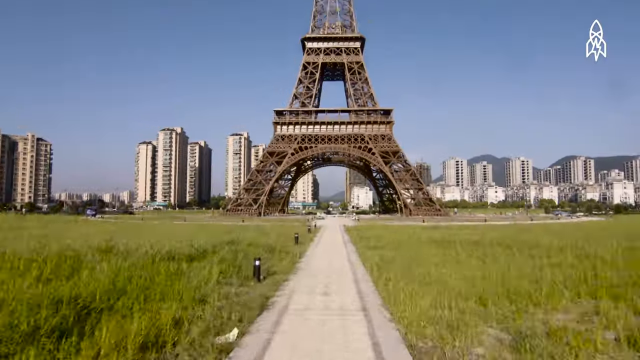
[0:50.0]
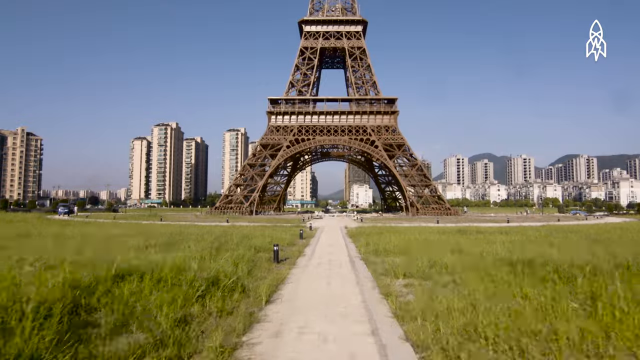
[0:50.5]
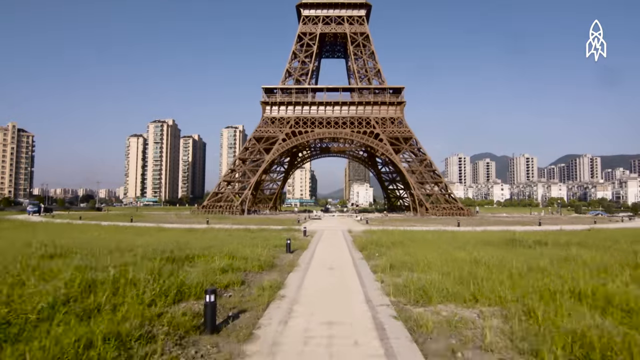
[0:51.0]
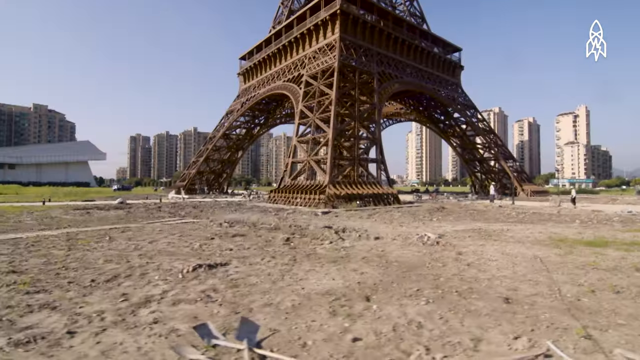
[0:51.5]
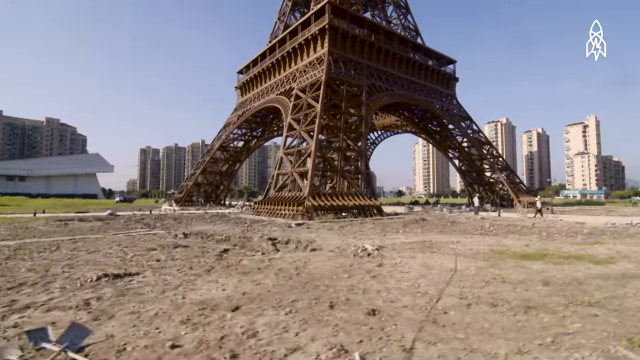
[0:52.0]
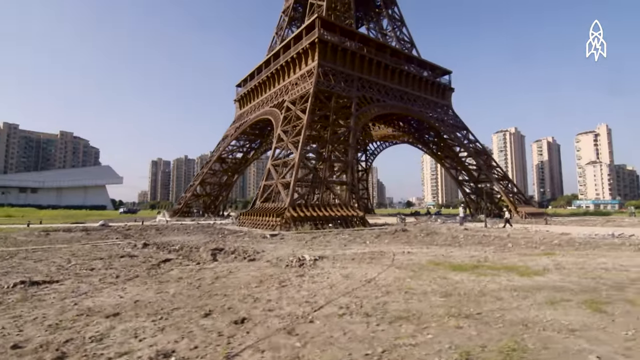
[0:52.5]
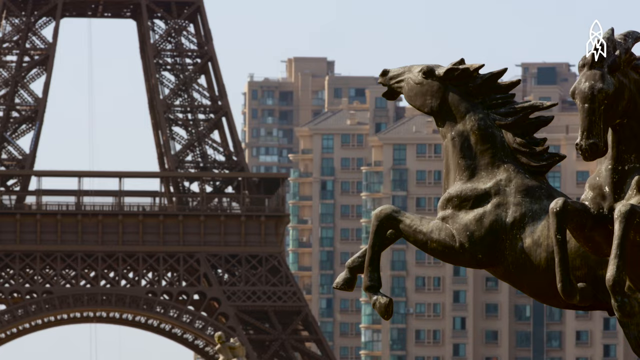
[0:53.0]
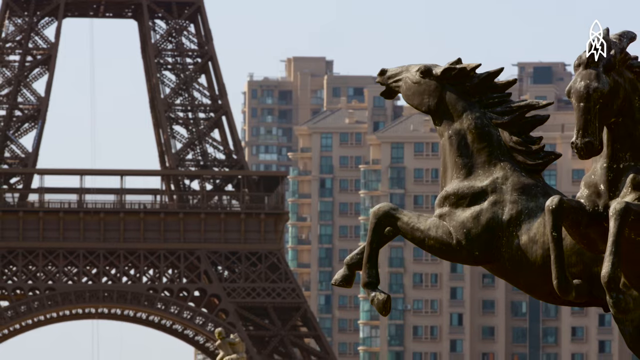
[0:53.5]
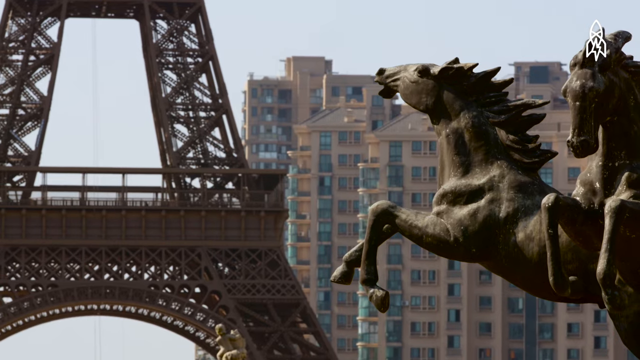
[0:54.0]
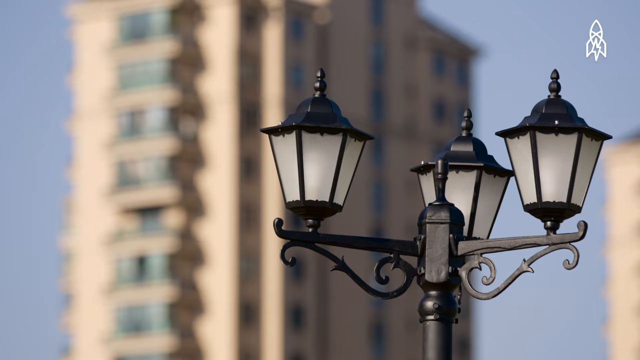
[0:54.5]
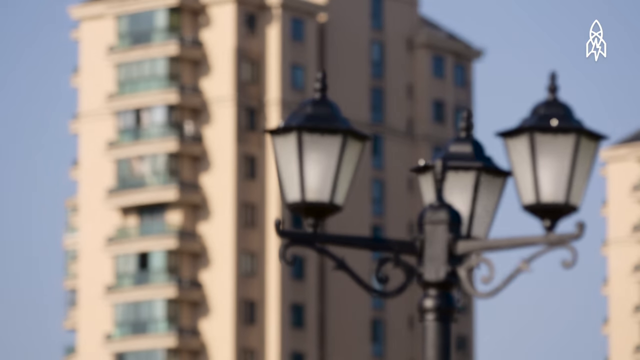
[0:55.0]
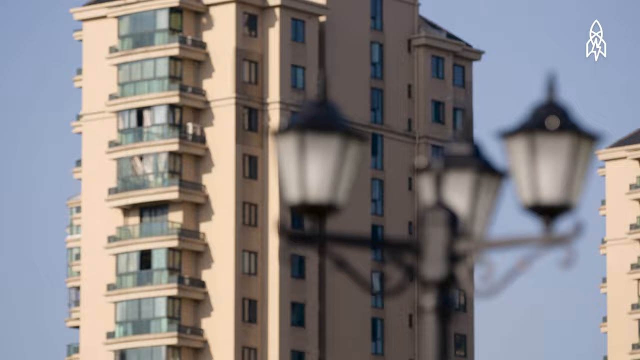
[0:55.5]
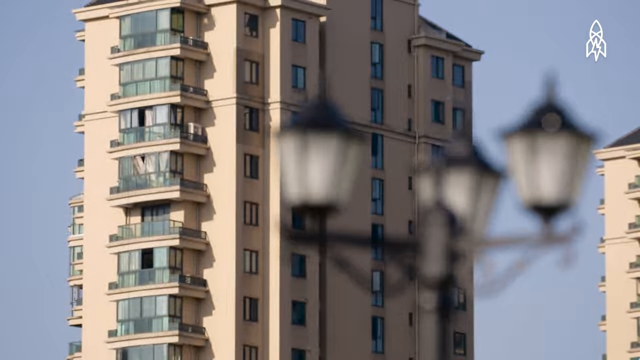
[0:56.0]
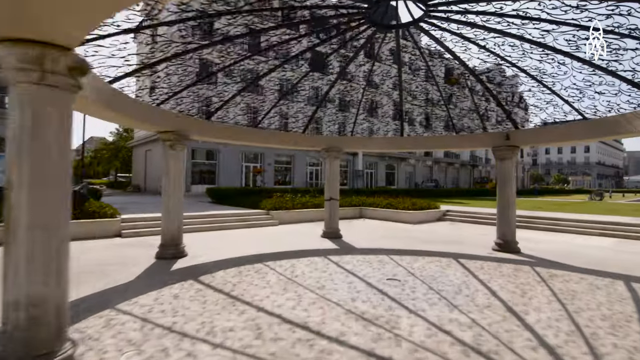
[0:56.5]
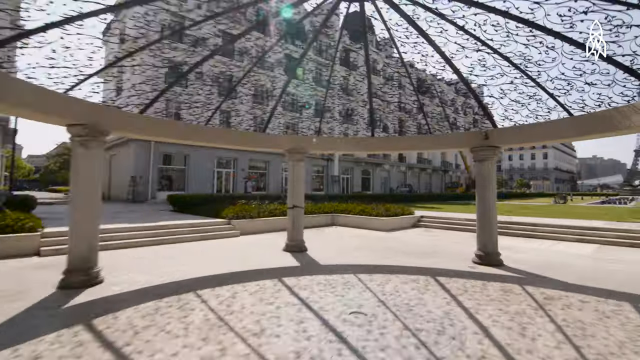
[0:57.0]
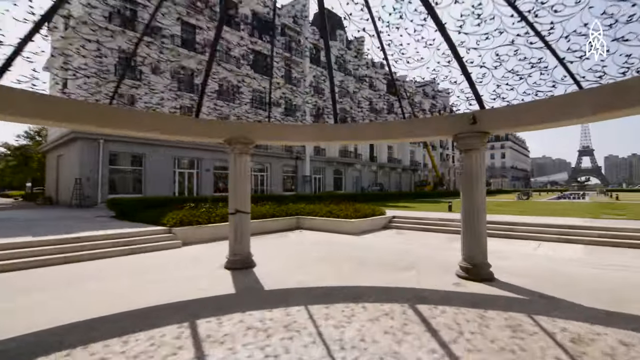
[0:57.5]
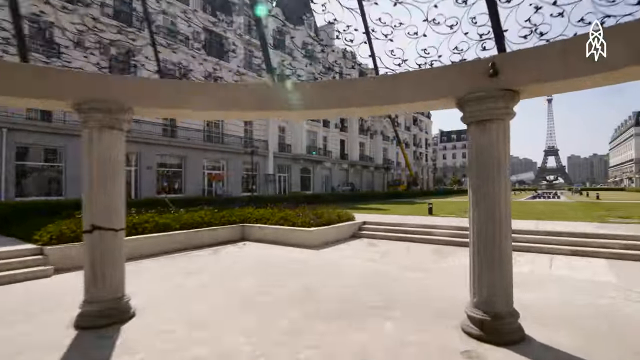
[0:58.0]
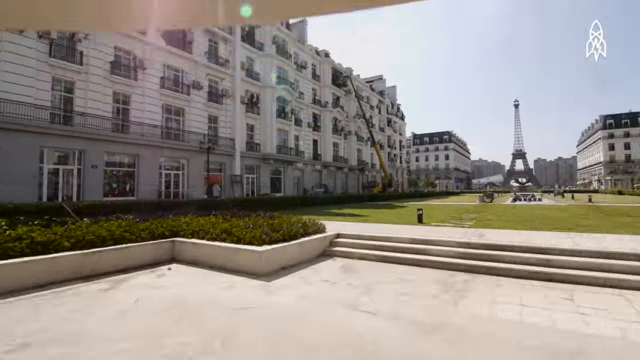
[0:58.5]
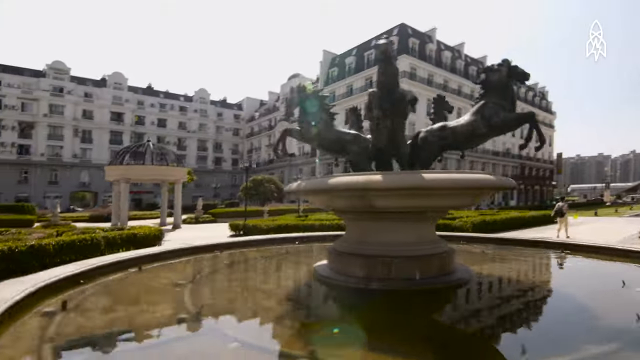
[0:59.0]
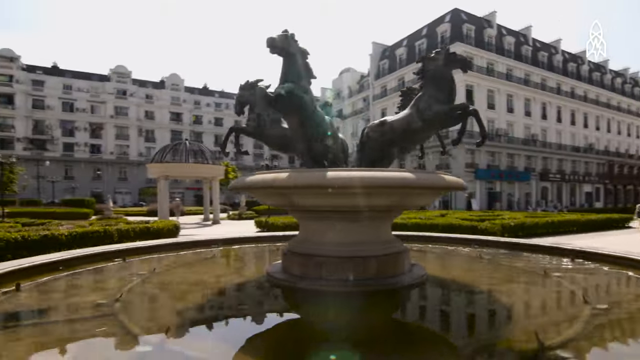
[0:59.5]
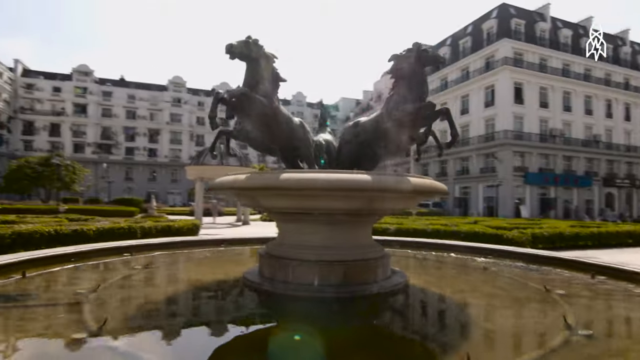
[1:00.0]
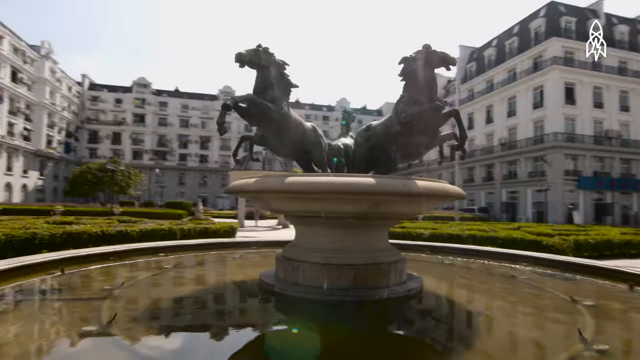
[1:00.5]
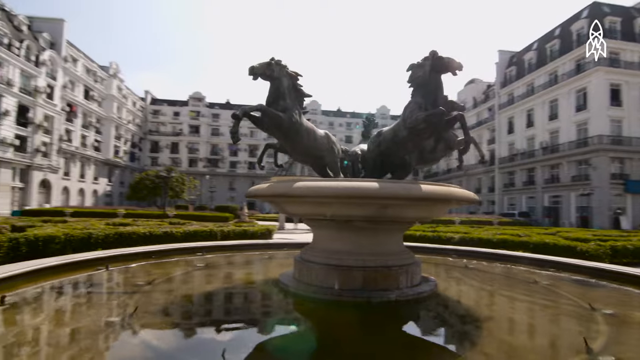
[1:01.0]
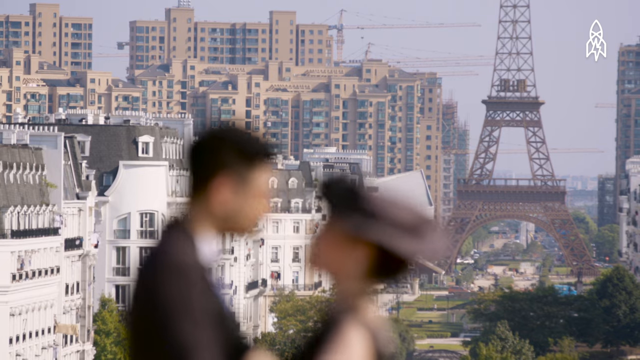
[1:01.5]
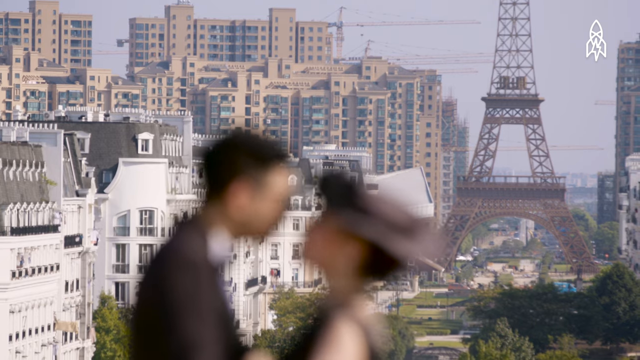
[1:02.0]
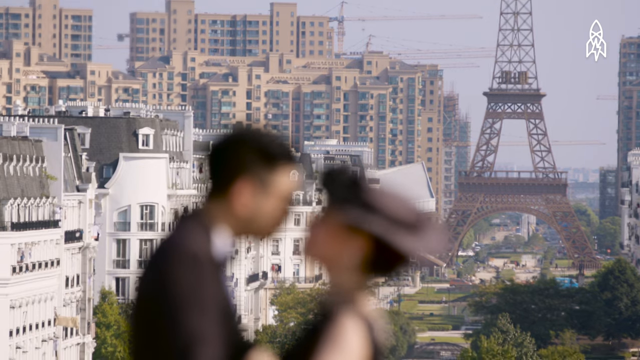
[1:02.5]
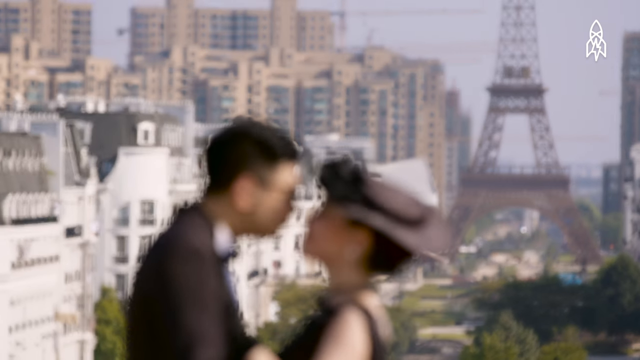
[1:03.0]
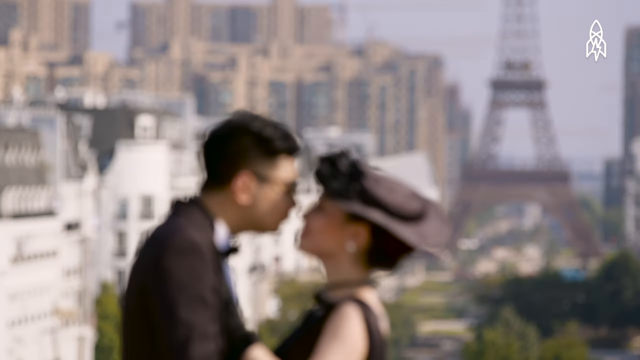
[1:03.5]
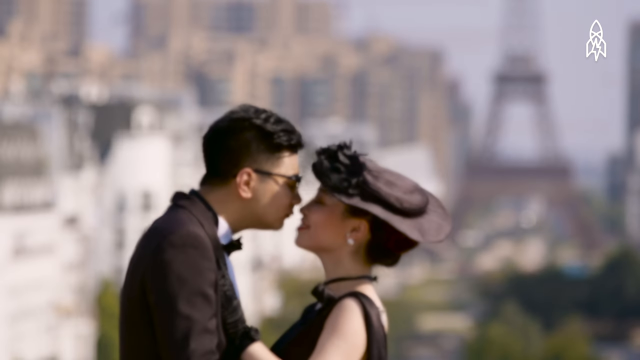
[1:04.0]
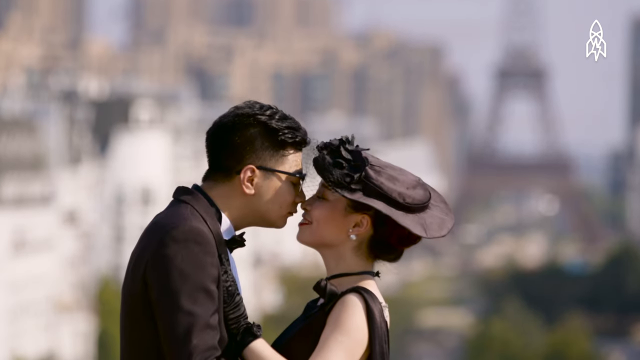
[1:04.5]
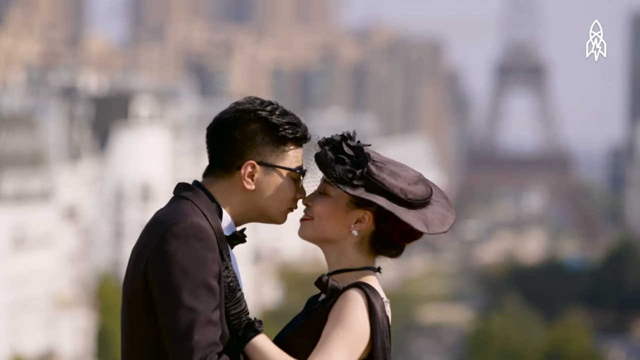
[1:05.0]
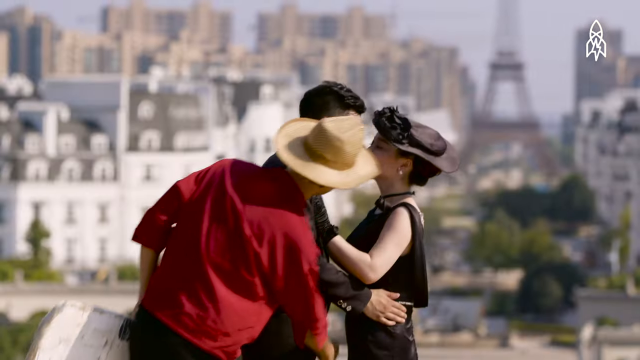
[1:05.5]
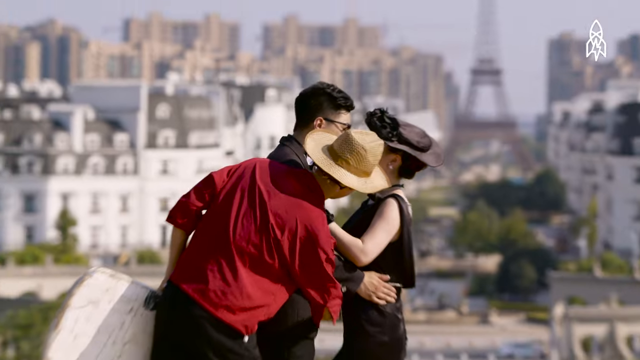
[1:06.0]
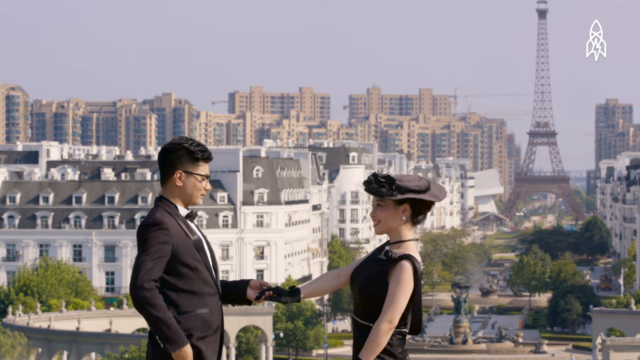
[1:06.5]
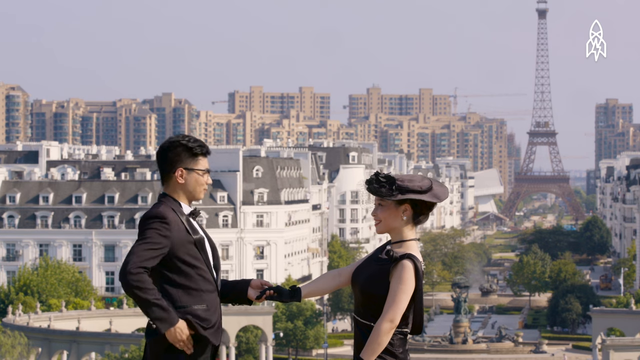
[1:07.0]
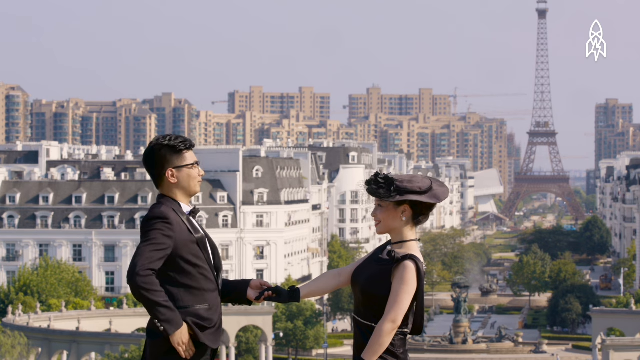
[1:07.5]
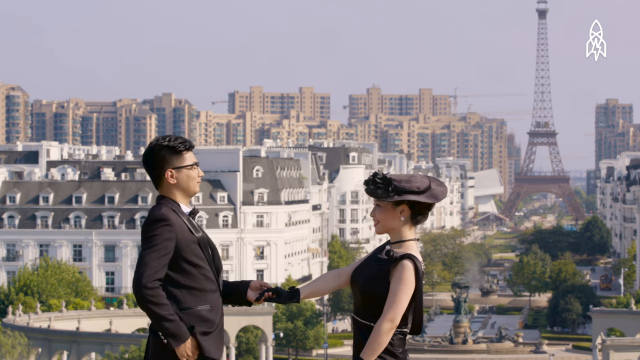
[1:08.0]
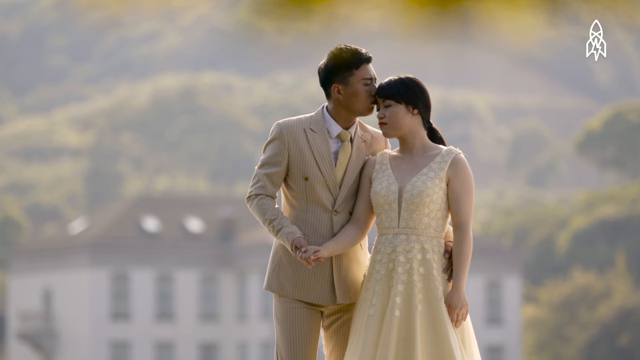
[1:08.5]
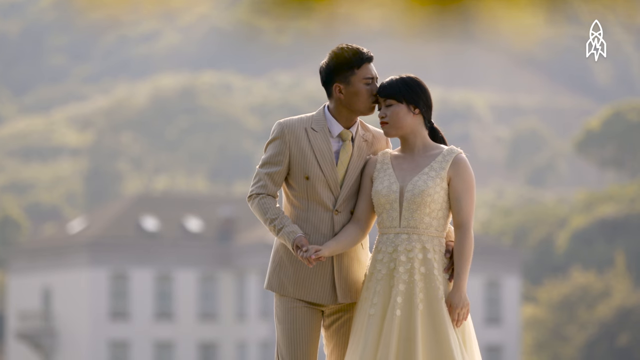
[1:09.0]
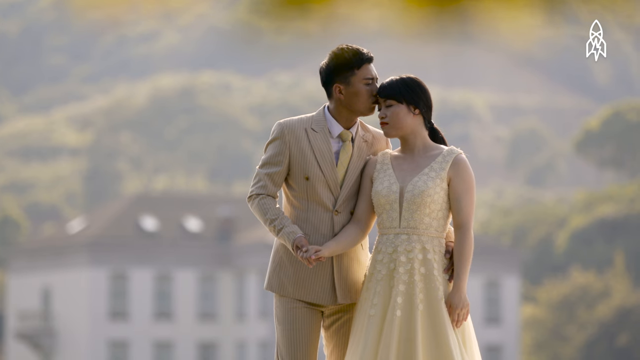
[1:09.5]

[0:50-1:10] Drone shots approach and circle the replica Eiffel Tower and the large recreated monuments. A hill looking out over the tower appears to be a popular spot for wedding photos: several shots show people standing up on the hill with the replica tower in the background. A photographer adjusts the clothes on a man, and in the next shot a different couple stands in front of the photographer having their picture taken, with the tower in the distance. Apartment buildings are being built all around the area. Many people are working around the base of the tower, and the ground around it looks kind of rocky and rough, so the area around the base is probably not finished yet.